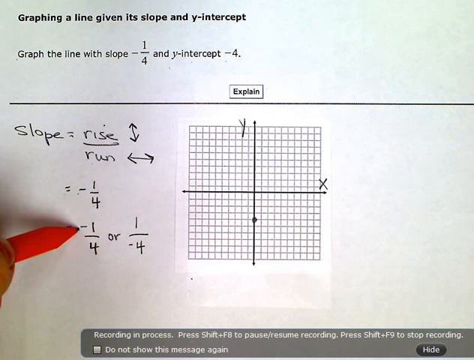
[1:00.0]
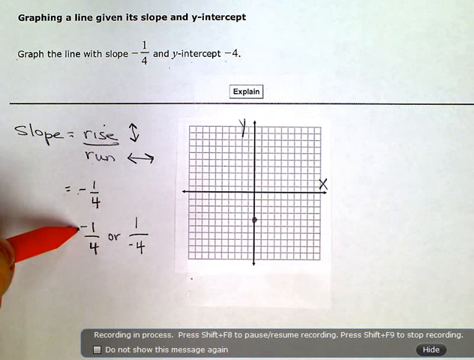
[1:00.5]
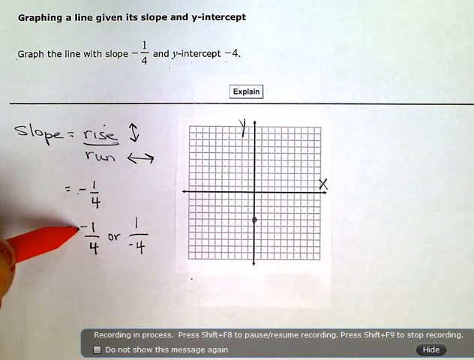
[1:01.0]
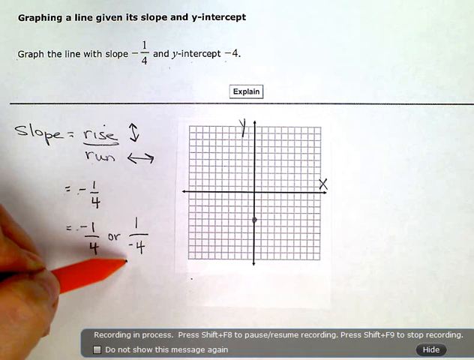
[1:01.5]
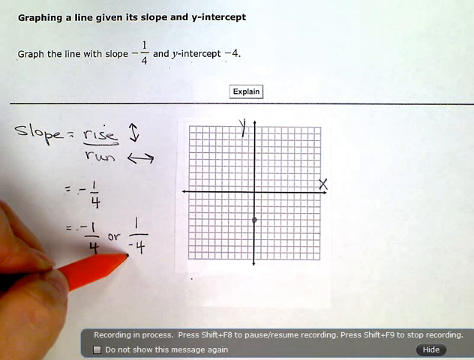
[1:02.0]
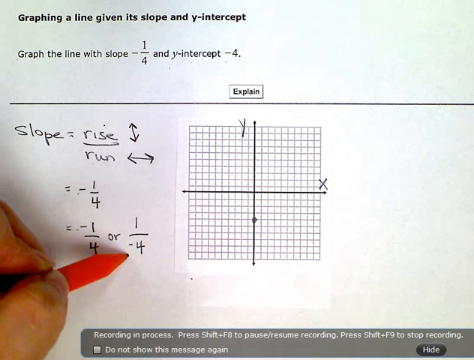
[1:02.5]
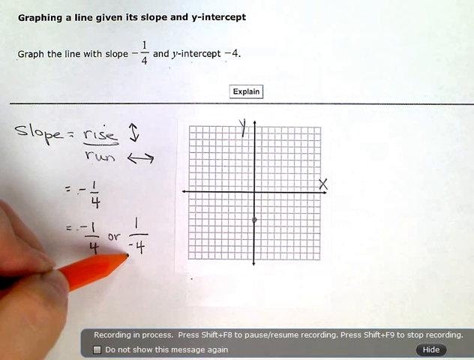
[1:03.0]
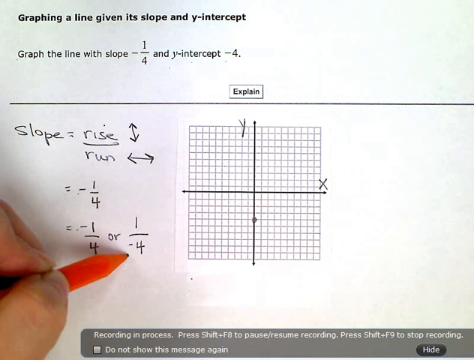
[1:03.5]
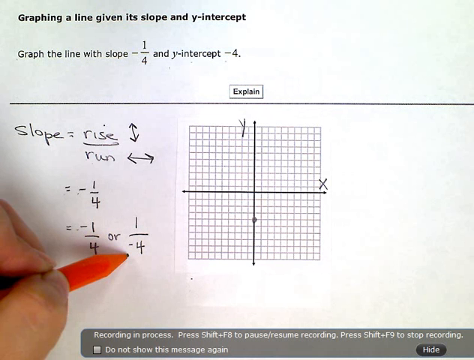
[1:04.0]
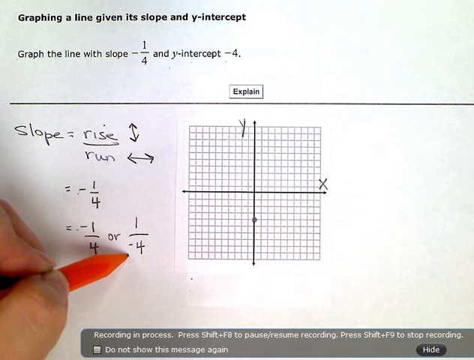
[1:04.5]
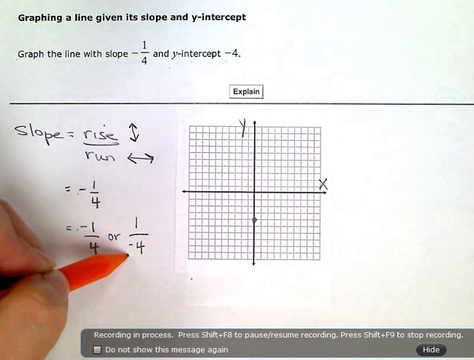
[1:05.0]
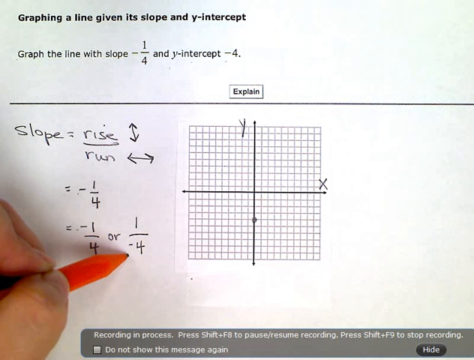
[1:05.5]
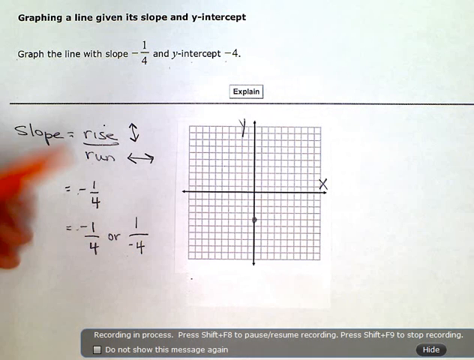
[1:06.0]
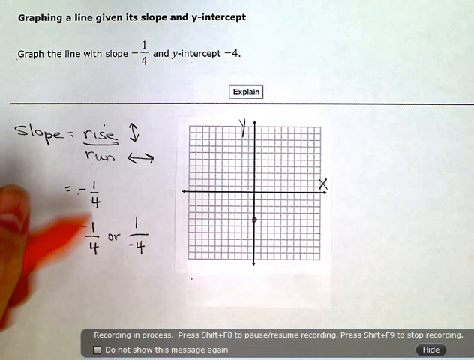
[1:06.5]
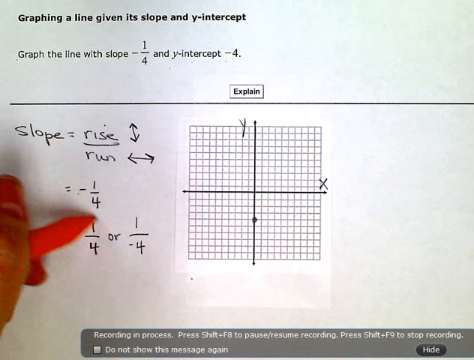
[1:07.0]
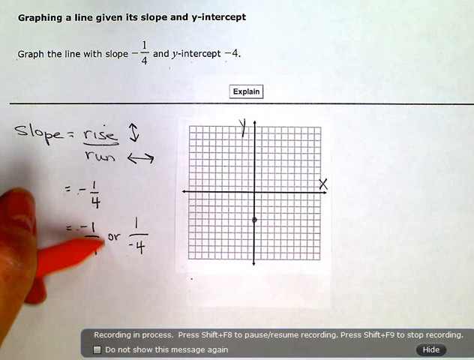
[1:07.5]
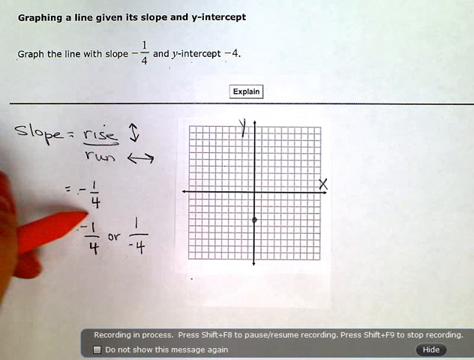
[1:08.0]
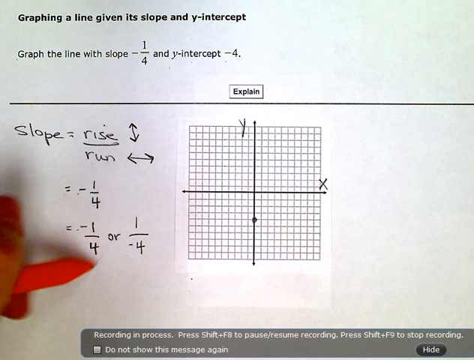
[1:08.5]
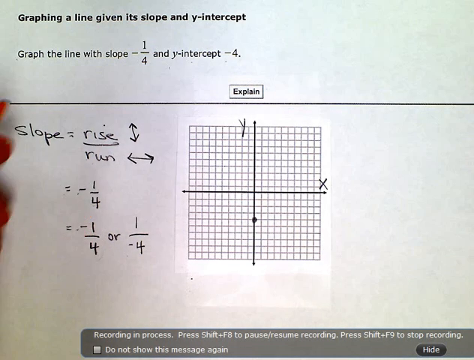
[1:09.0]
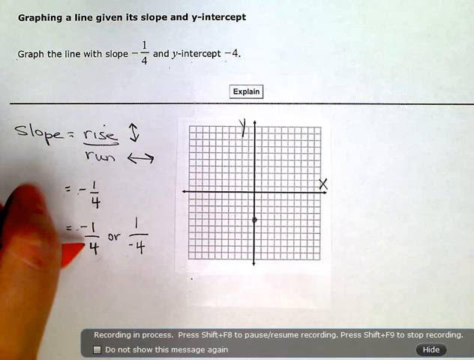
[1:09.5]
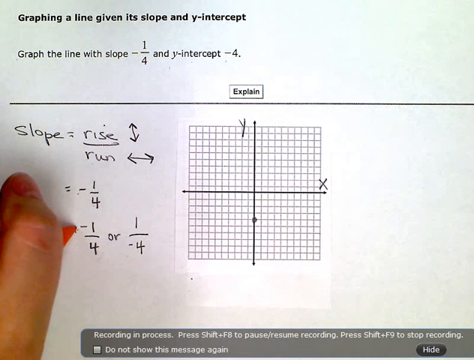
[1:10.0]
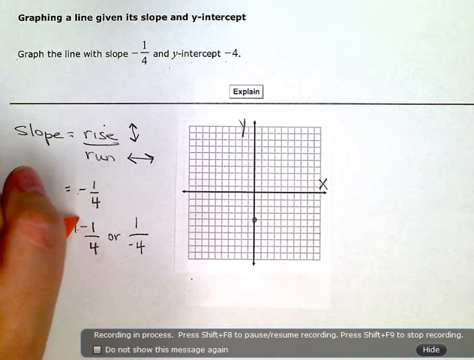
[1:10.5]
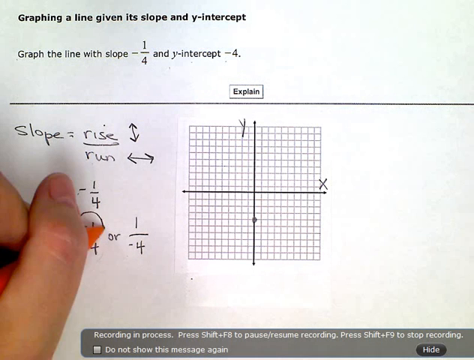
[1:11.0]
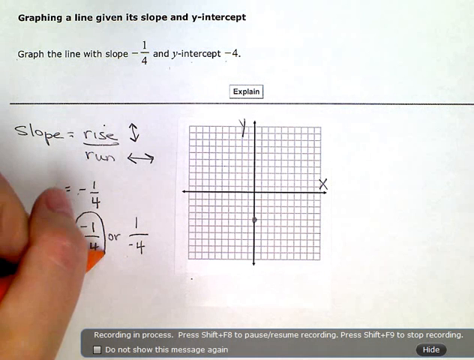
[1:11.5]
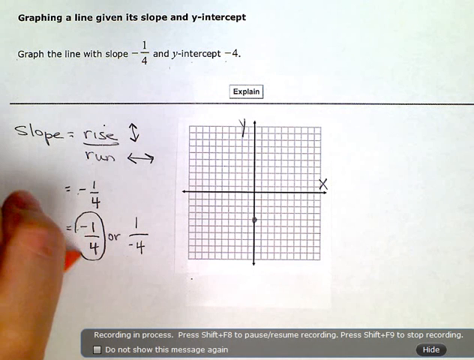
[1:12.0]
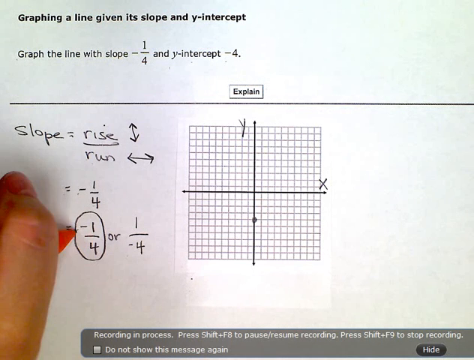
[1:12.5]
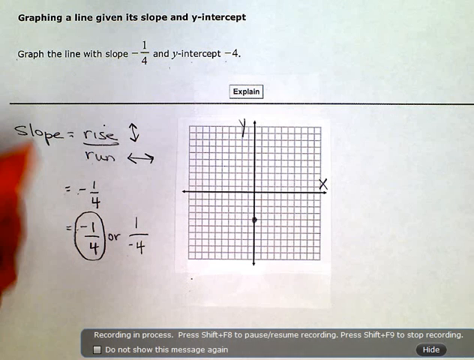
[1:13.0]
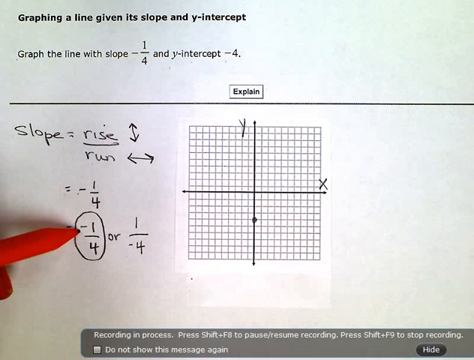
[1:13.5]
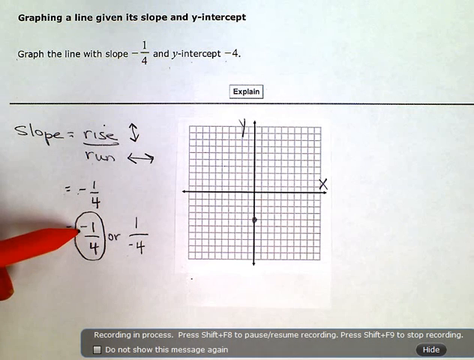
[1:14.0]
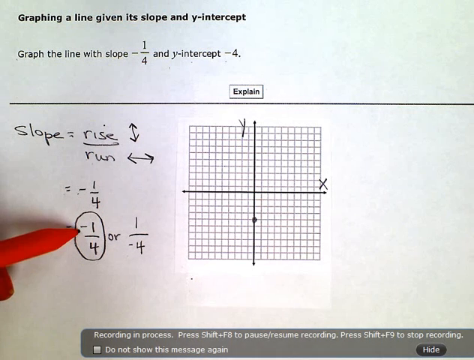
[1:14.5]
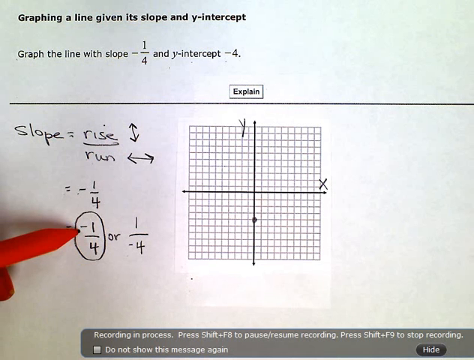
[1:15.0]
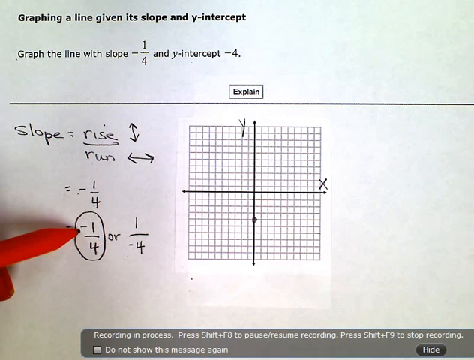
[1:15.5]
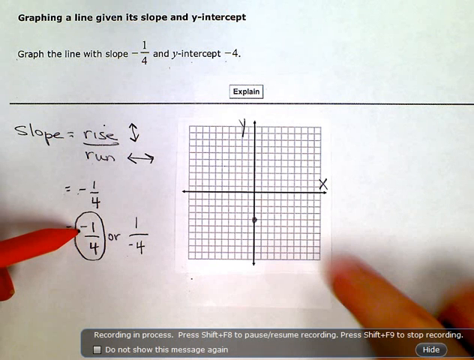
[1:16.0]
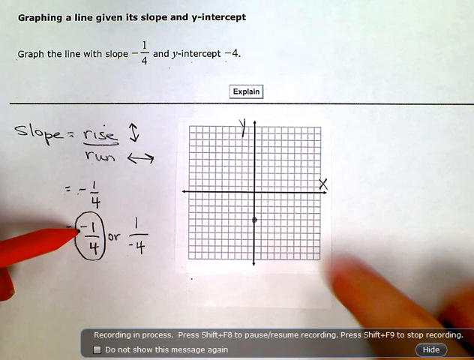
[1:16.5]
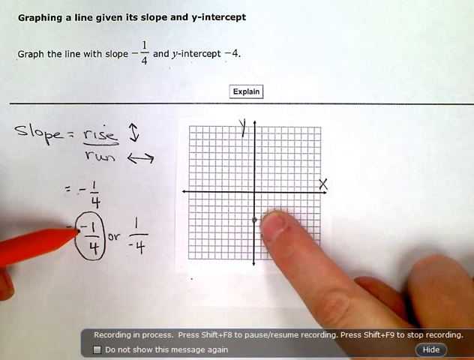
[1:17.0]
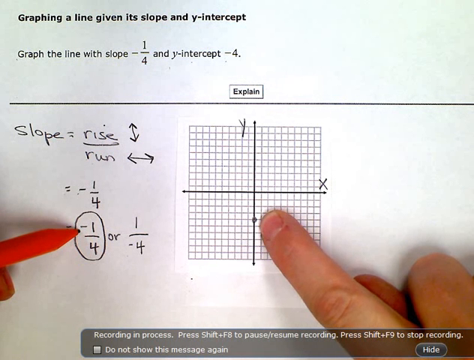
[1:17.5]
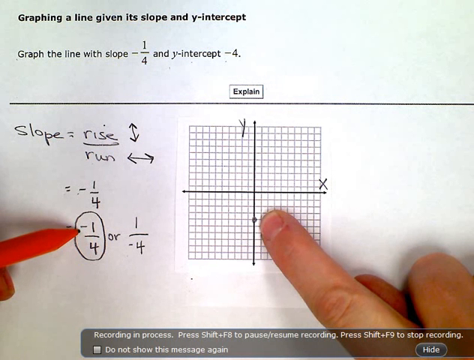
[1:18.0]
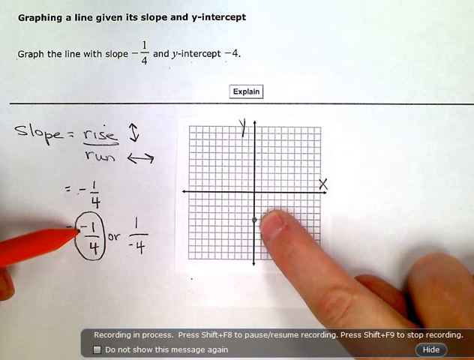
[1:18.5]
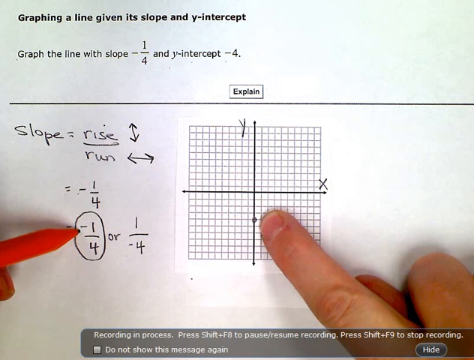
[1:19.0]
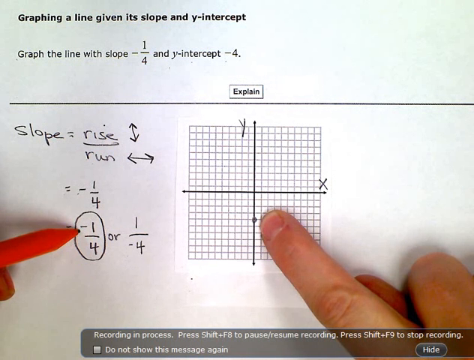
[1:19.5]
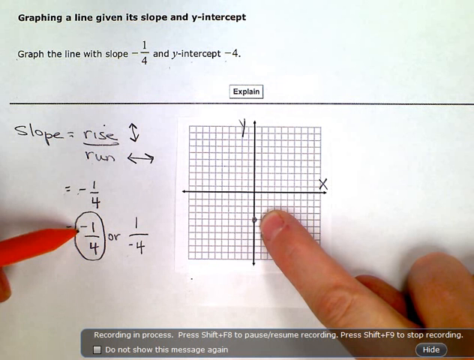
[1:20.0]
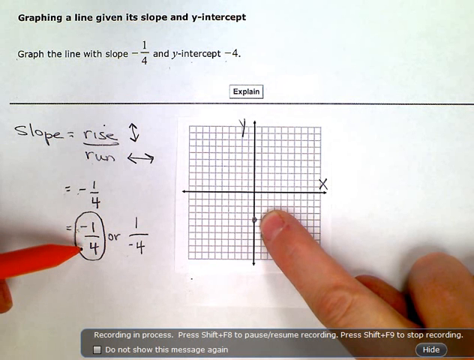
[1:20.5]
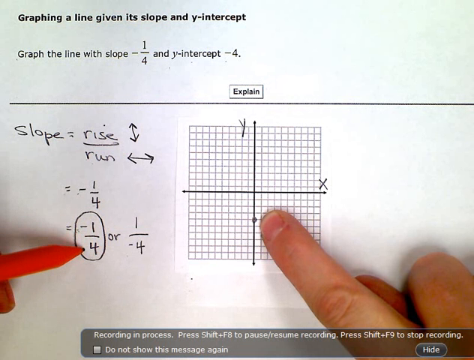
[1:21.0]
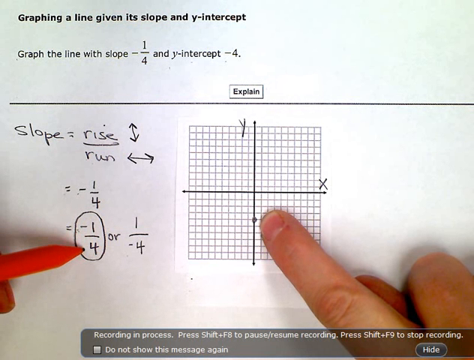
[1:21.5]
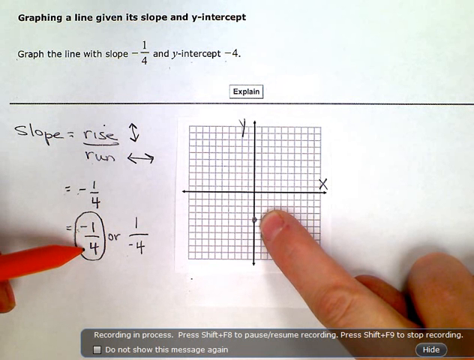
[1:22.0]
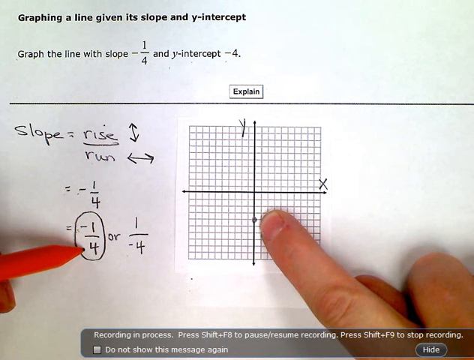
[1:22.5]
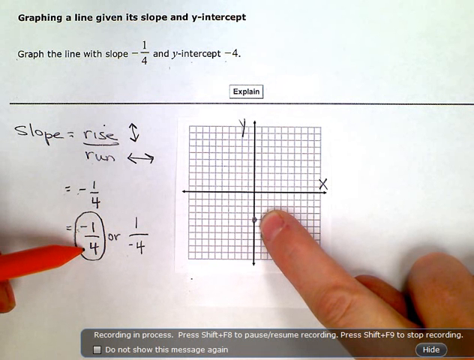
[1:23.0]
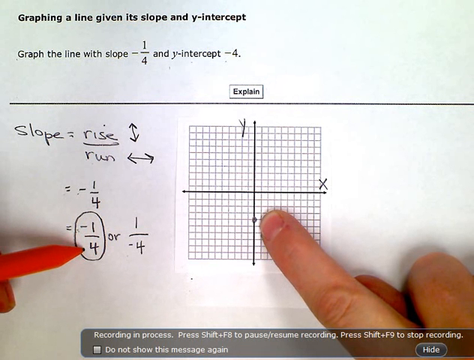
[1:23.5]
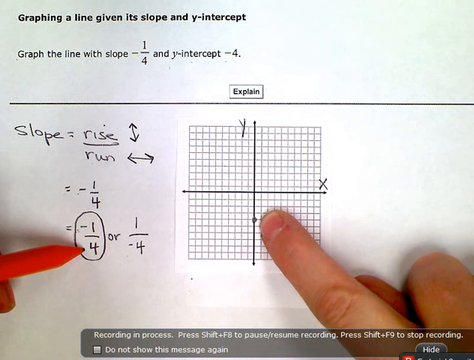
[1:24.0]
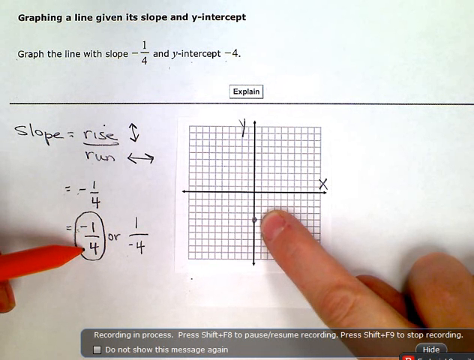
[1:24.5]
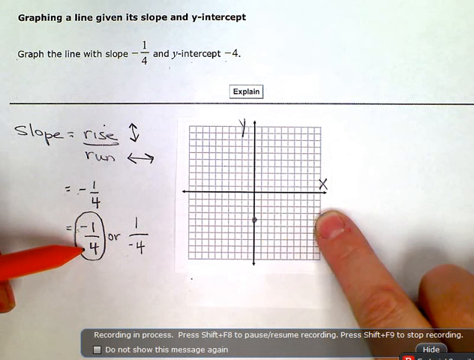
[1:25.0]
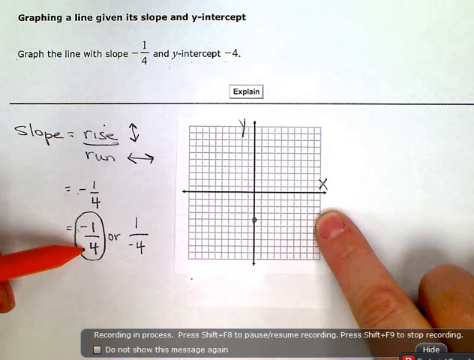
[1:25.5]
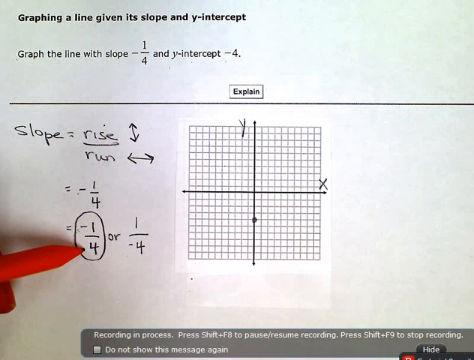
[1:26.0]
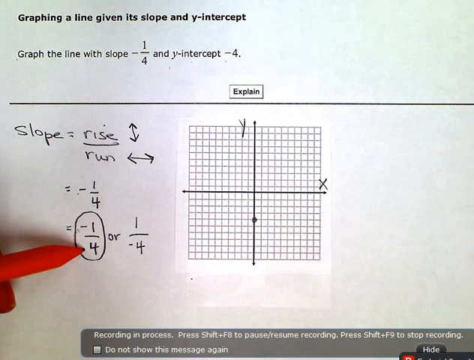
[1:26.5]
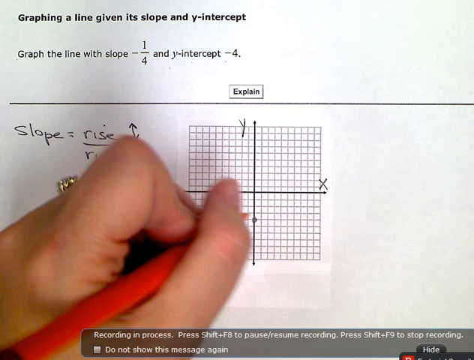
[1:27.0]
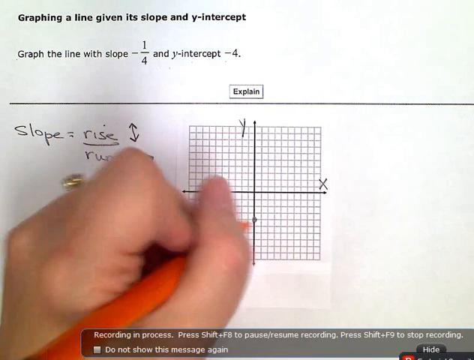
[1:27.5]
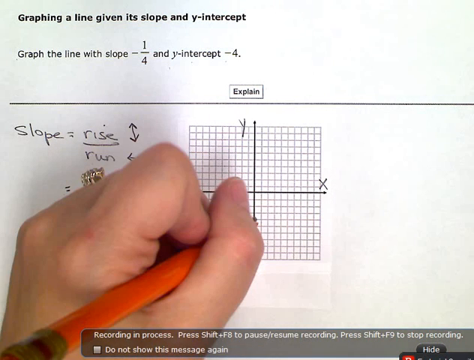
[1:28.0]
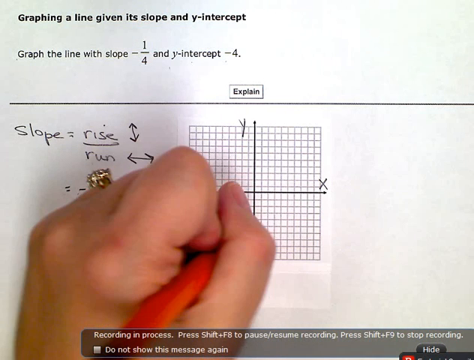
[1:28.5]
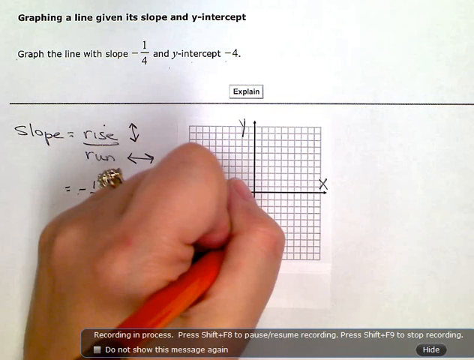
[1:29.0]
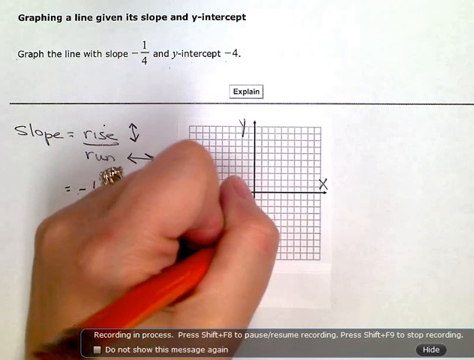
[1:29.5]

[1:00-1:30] The instructor starts pointing toward the negative one over four on the left side of the screen. On the grid, the y-intercept of negative four on the y-axis is plotted. They appear to be going over the rise over run, or slope, formula. The text reads negative one over four or one over negative four, and the negative one over four has been circled with a red writing utensil, apparently to be plotted onto the grid. They point with their right hand directly at the plotted dot on the y-intercept at negative four, while their left hand seems to emphasize the circled negative one over four. Eventually they stop pointing on the right side and appear to go plot another point on the grid, circling what looks like a spot underneath the y-intercept.